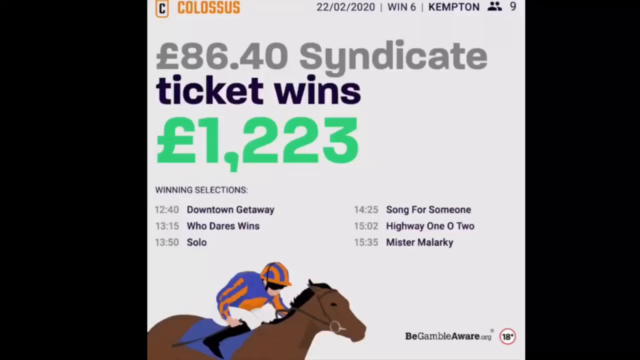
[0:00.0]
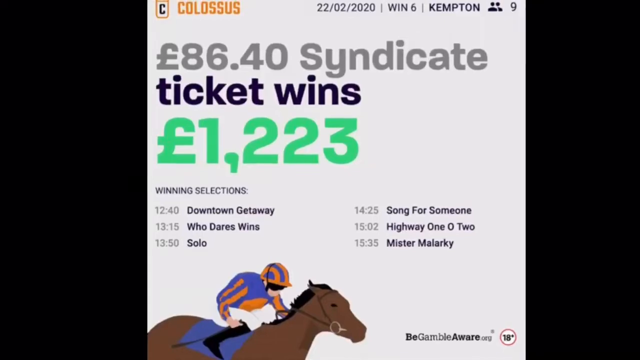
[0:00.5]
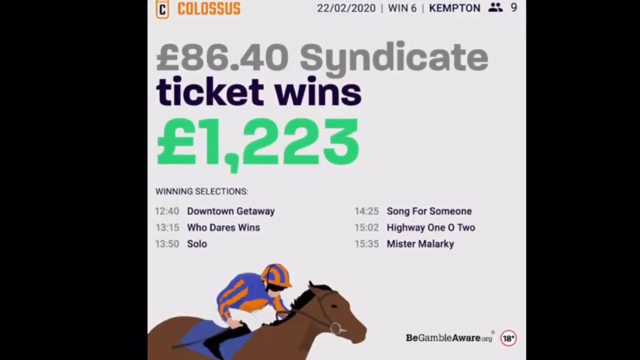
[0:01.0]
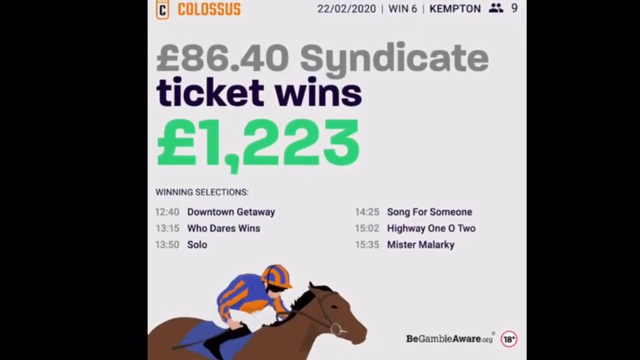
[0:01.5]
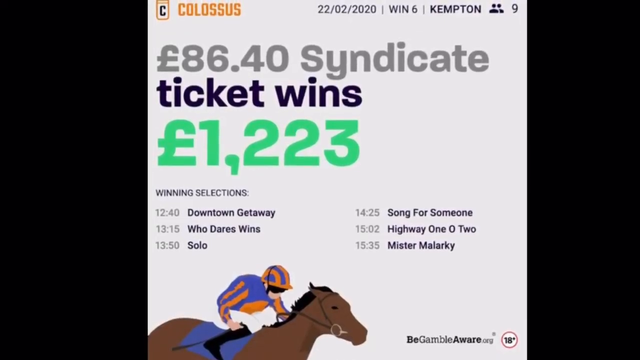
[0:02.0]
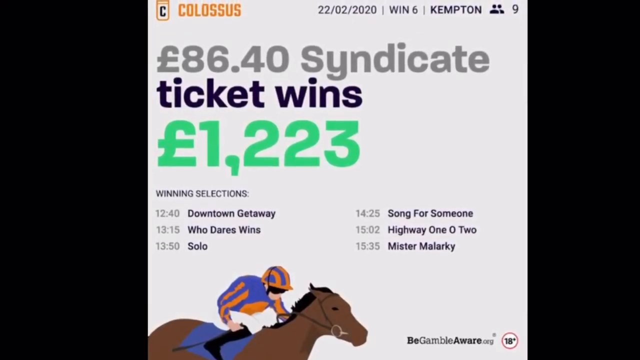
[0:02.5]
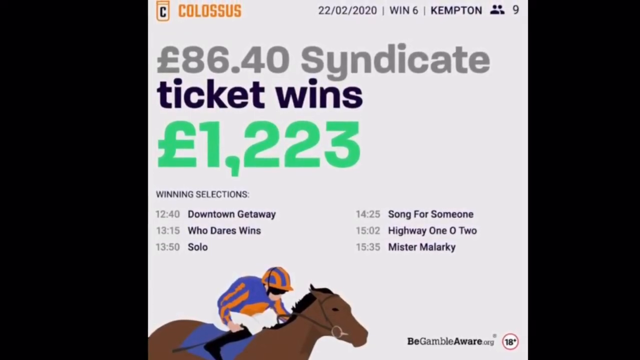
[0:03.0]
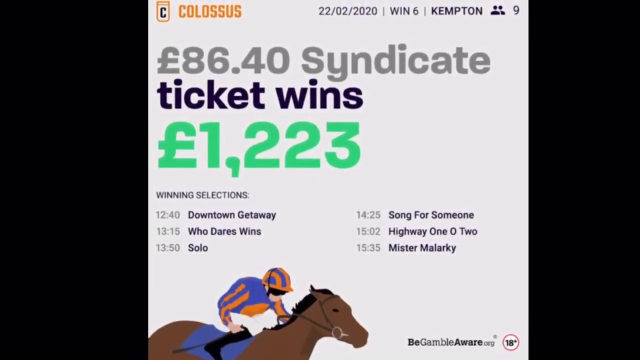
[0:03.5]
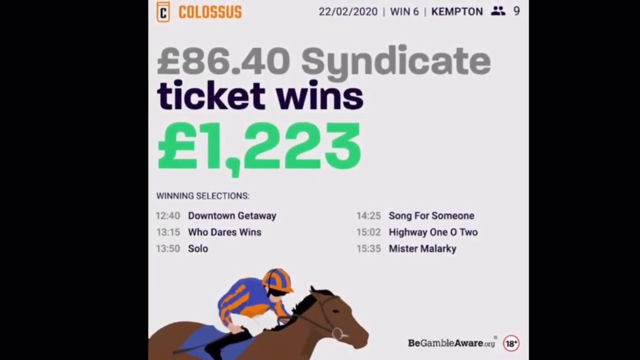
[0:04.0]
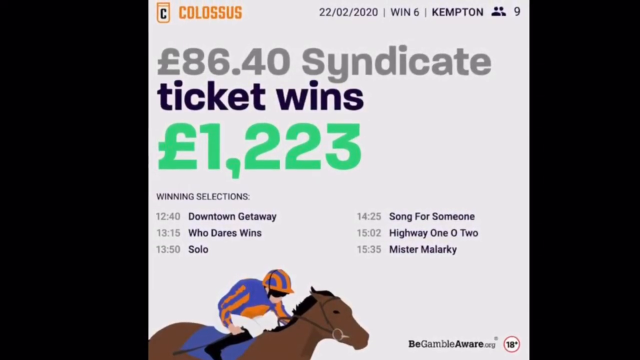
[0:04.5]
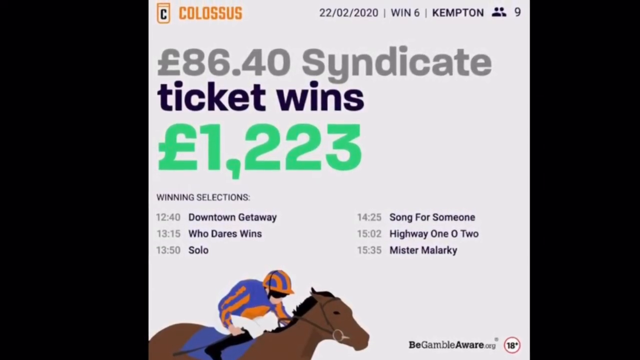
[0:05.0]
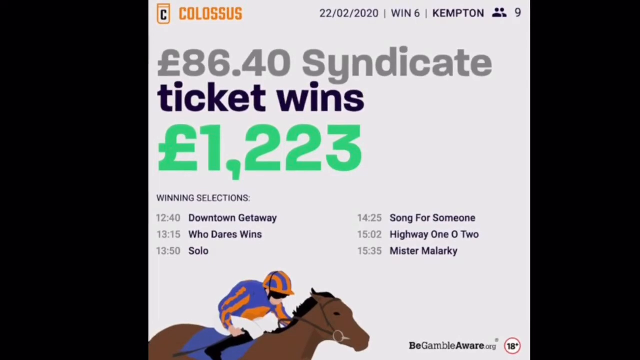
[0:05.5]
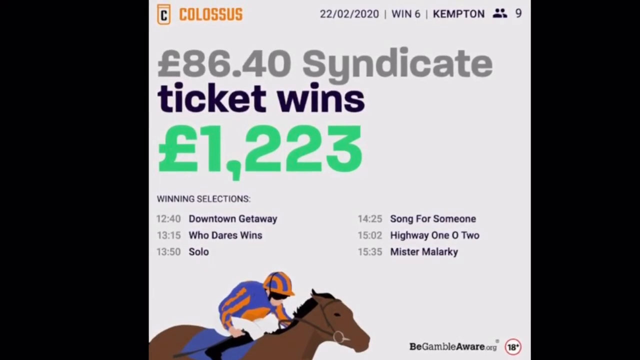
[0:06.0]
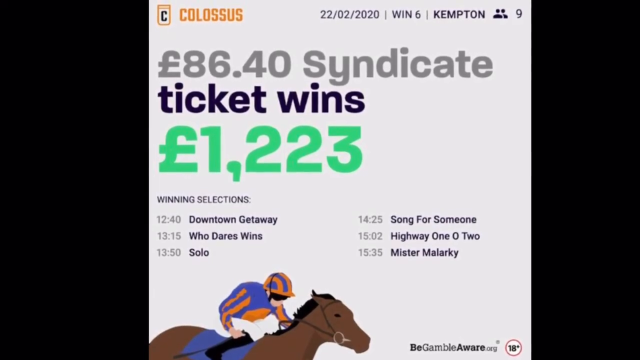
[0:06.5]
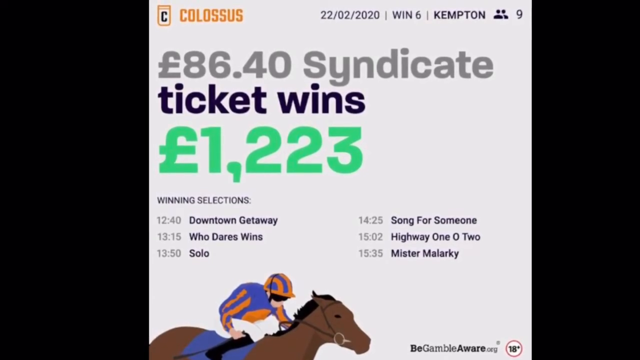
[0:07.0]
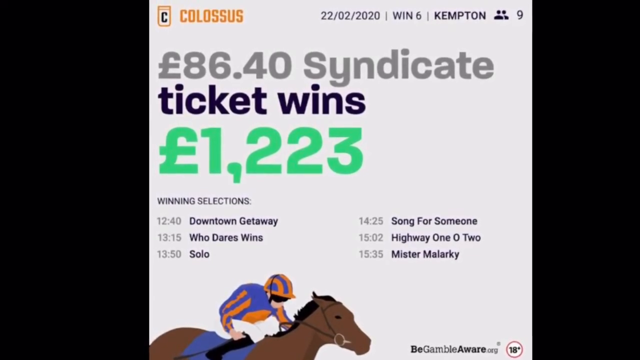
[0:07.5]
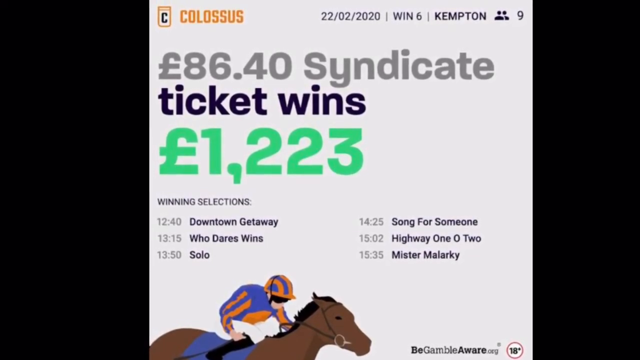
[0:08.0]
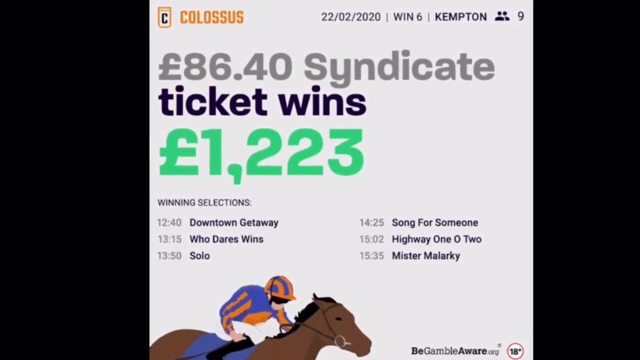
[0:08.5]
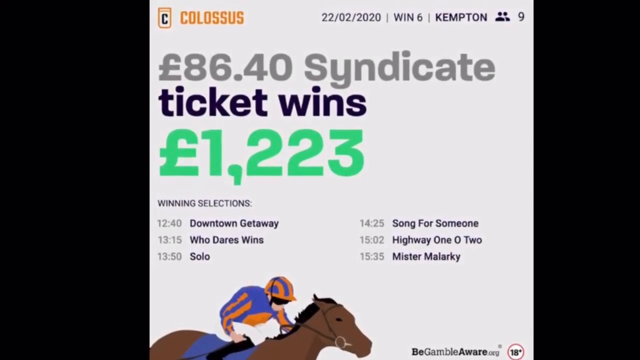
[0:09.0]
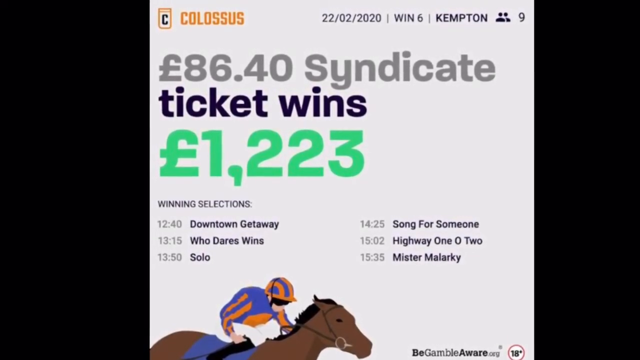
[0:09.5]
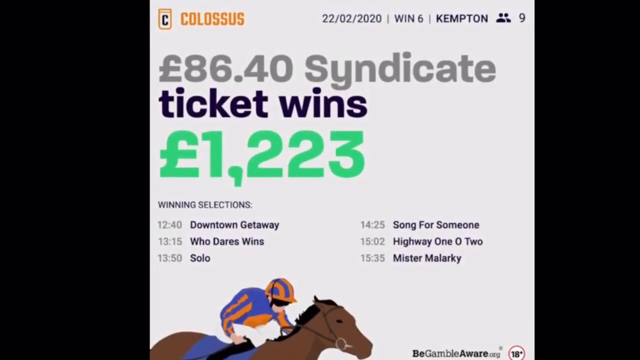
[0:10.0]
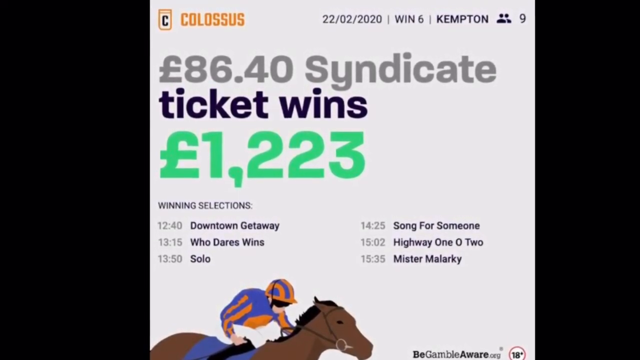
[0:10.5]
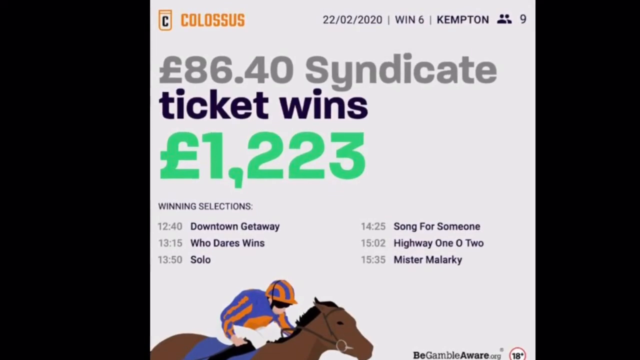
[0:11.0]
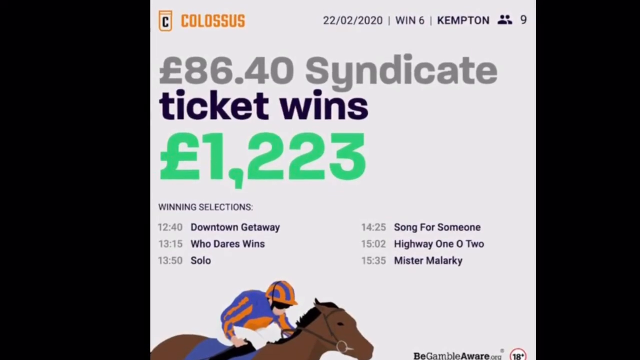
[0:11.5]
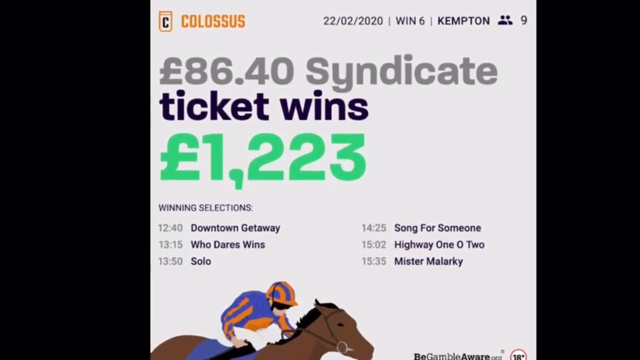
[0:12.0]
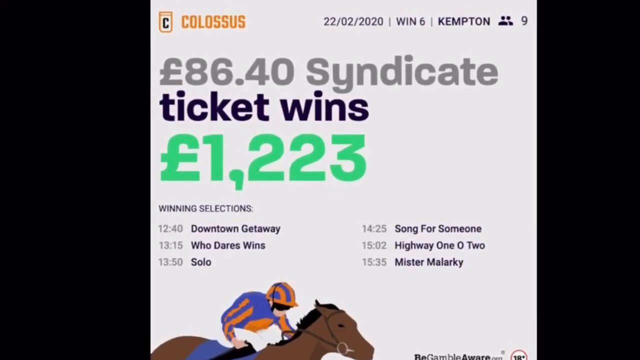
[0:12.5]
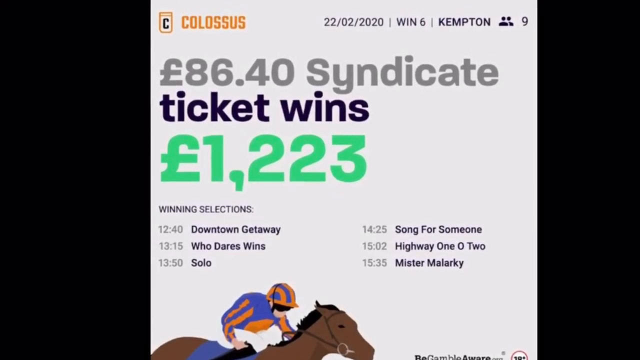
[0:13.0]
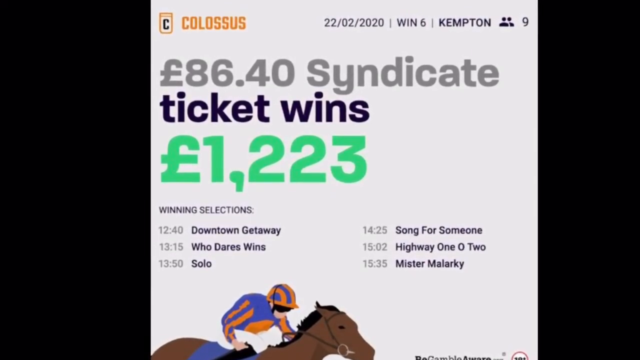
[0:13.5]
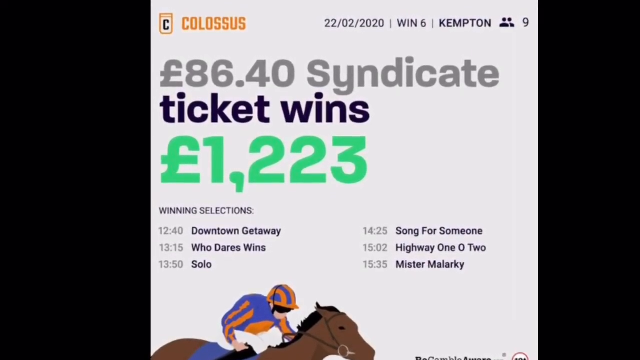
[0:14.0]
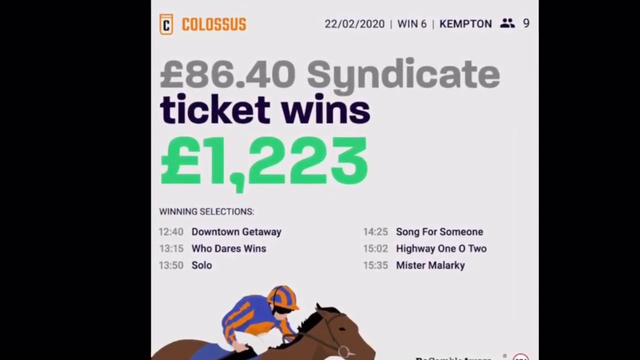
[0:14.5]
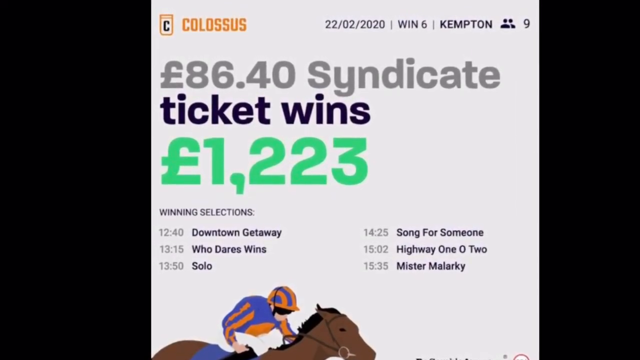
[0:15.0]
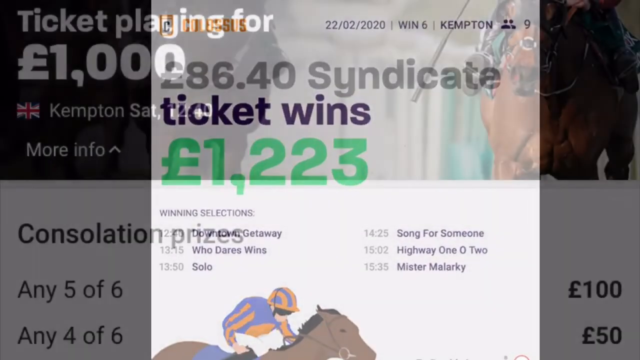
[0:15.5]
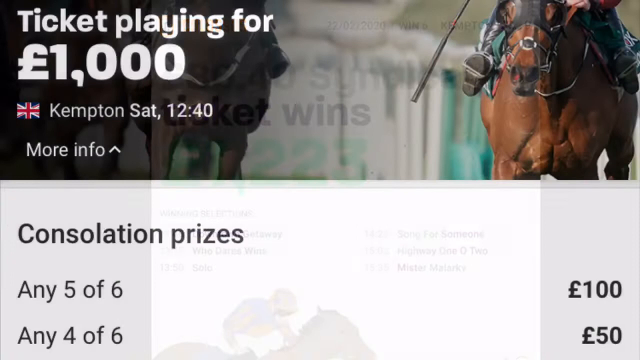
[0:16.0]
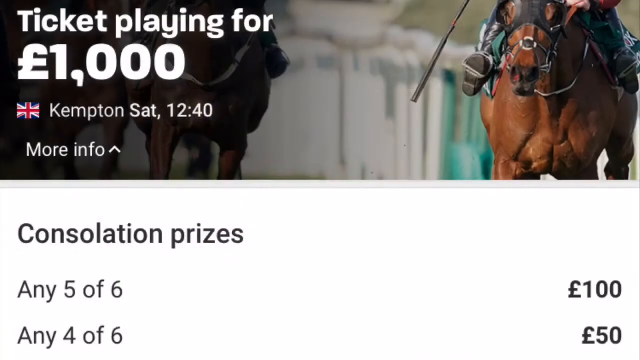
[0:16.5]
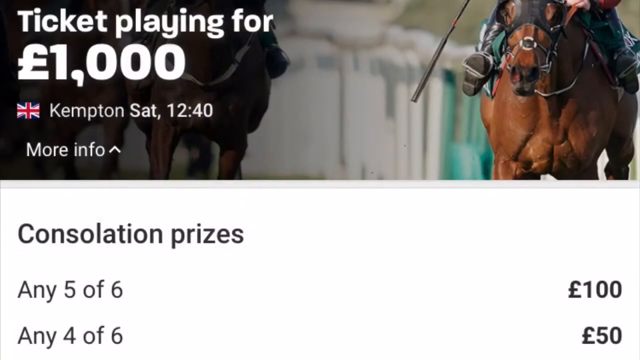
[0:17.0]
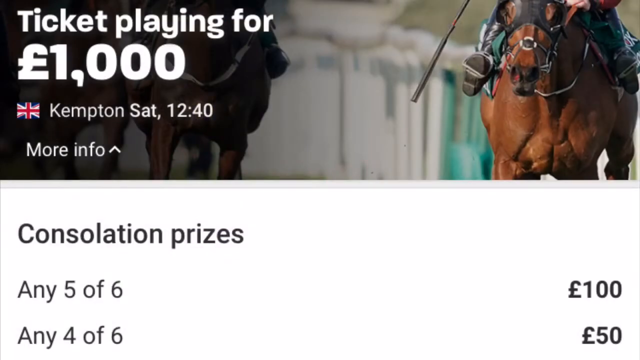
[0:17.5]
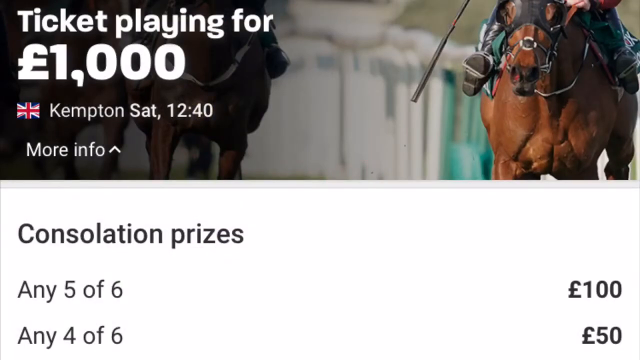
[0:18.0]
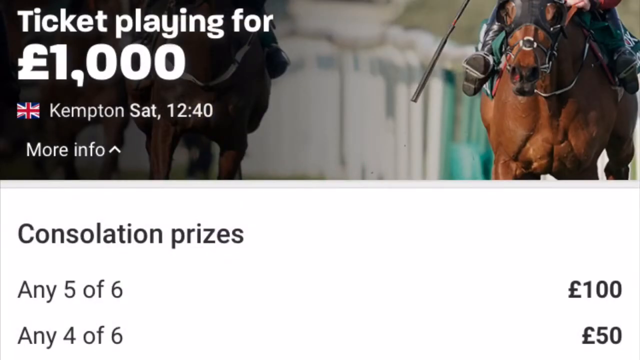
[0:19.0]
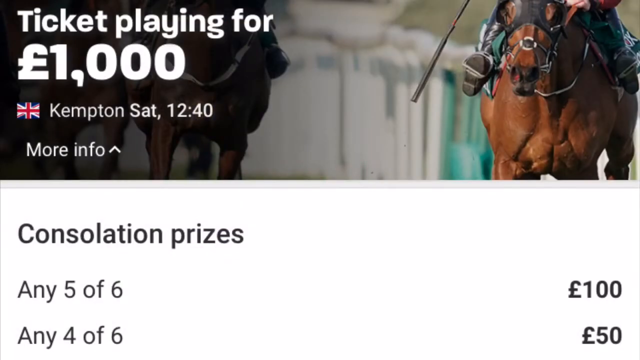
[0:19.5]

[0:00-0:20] The video shows a syndicate ticket win. An amount reads "86.40" and the ticket wins 1,223, in a foreign currency rather than US dollars. Text reads "ticket playing for 1000" and "Kempton Saturday, 1240, more info", with a British flag next to Kempton. It also says "consolation prizes", with "any five of six" and "any four of six" printed at the bottom. On the original page, "Colossus" appears in orange, and there is a white box with a black C in the middle. Underneath, it says "winning selections", listing "downtown getaway", "who dares wins solo", "song for someone", "highway 102" and "Mr. Marlarski". At the bottom of the page is a brown horse with a jockey riding it; the jockey wears orange and blue with striped sleeves and a striped hat.